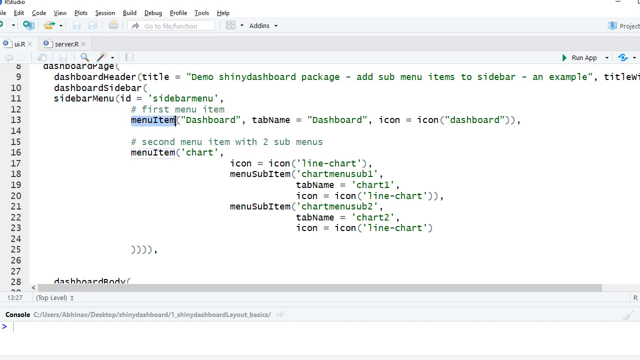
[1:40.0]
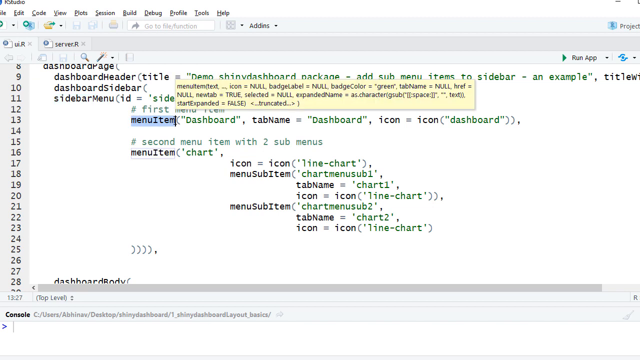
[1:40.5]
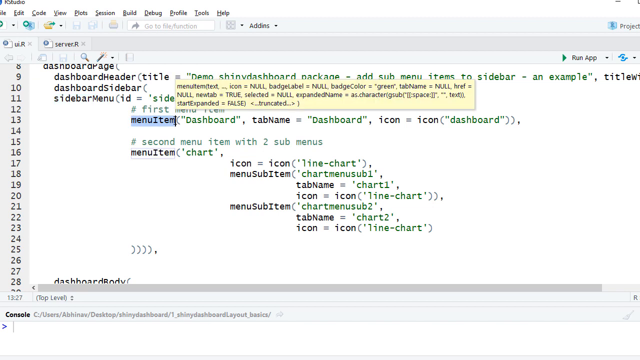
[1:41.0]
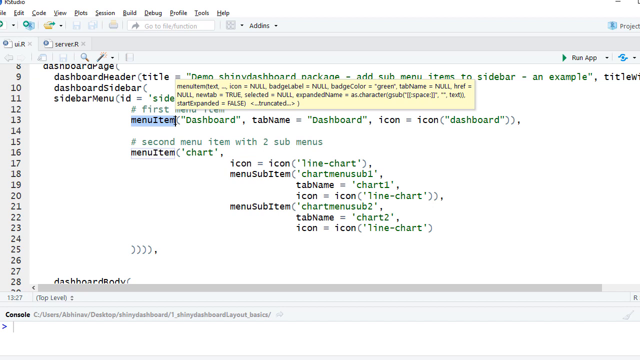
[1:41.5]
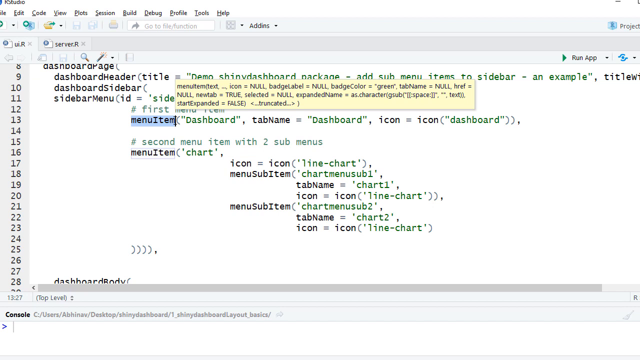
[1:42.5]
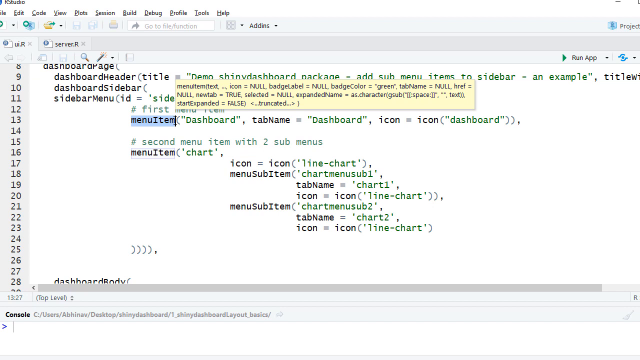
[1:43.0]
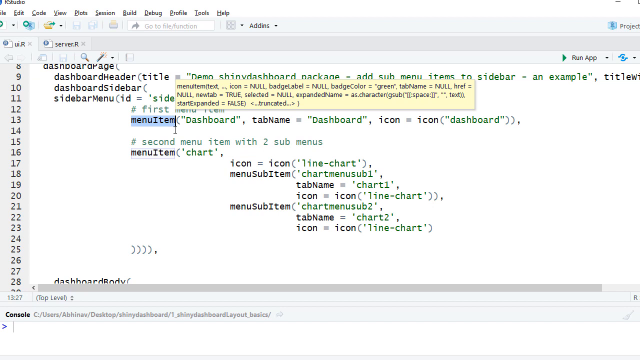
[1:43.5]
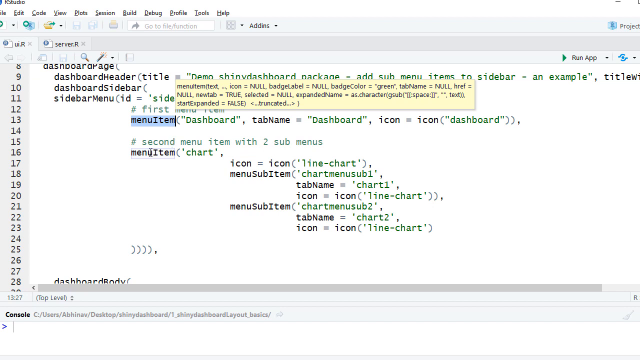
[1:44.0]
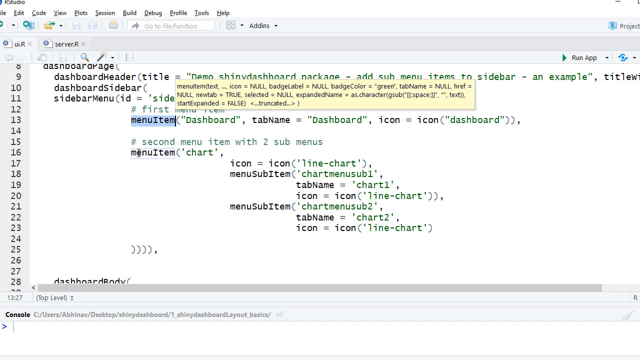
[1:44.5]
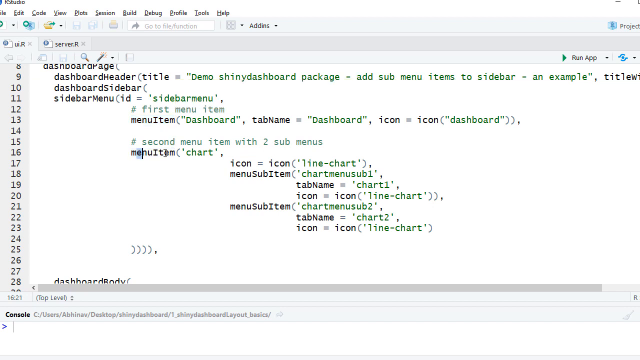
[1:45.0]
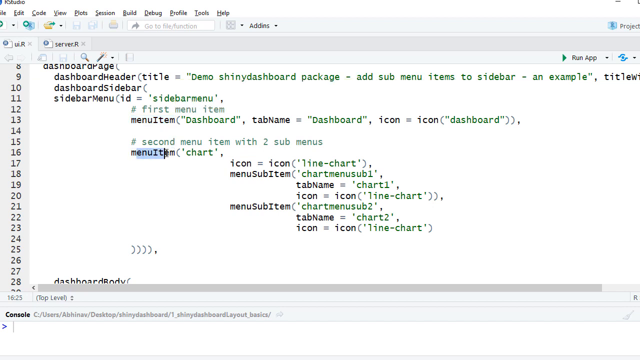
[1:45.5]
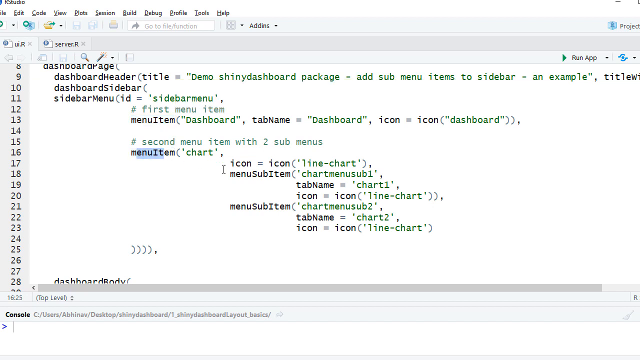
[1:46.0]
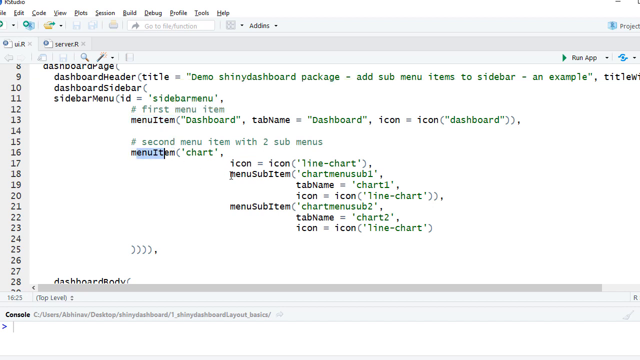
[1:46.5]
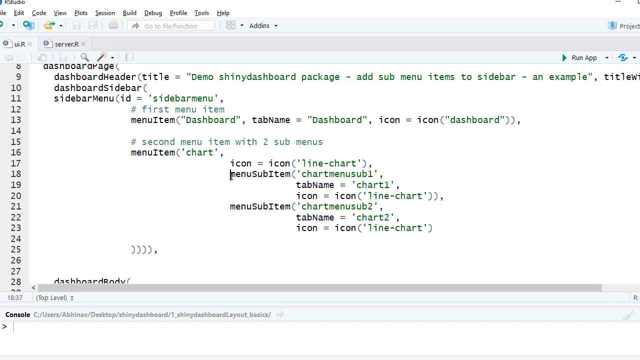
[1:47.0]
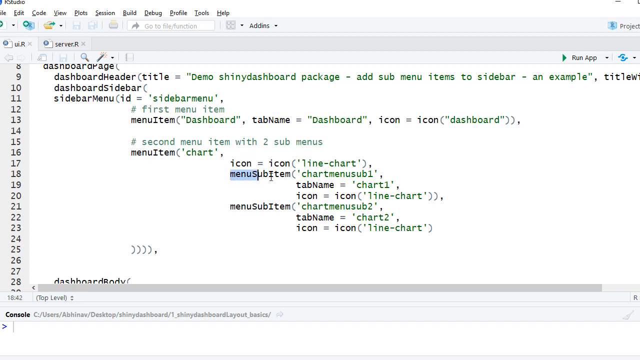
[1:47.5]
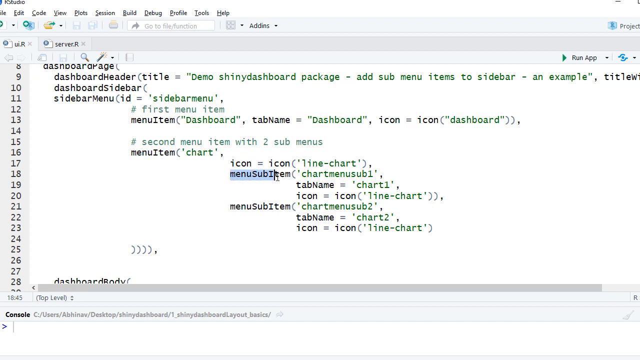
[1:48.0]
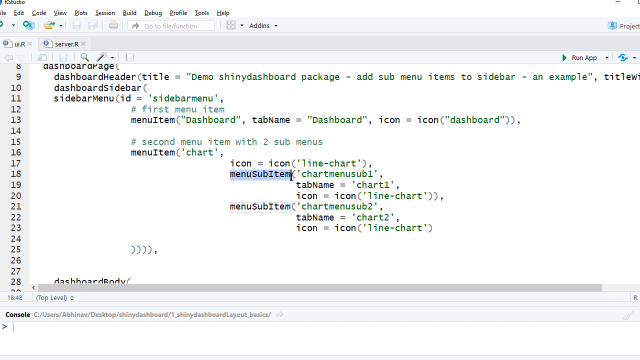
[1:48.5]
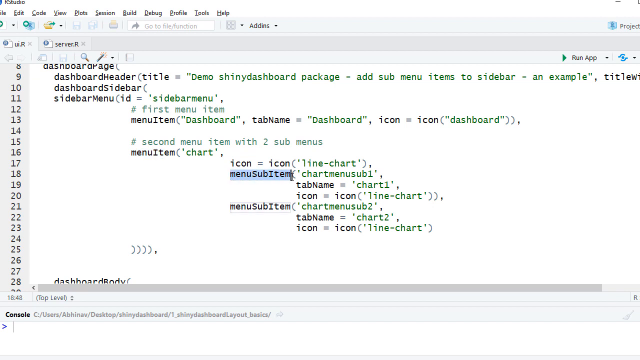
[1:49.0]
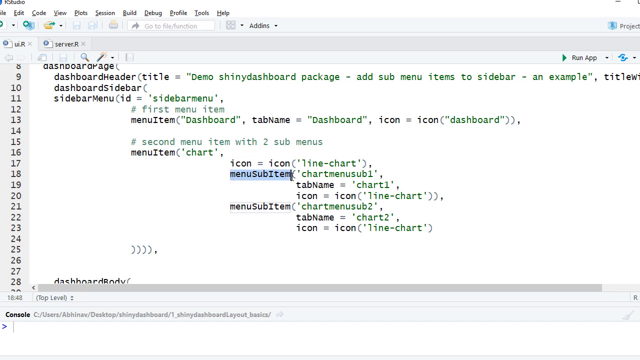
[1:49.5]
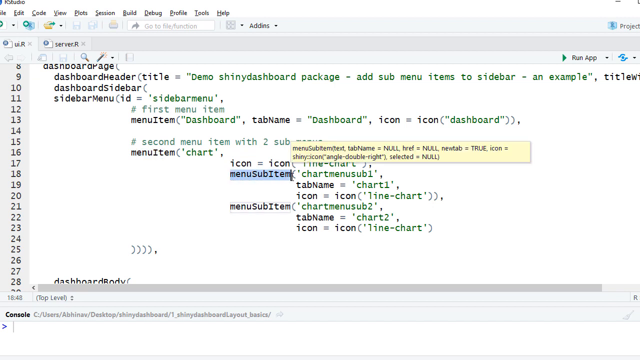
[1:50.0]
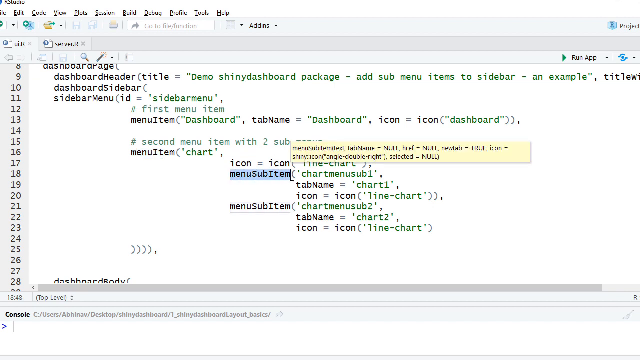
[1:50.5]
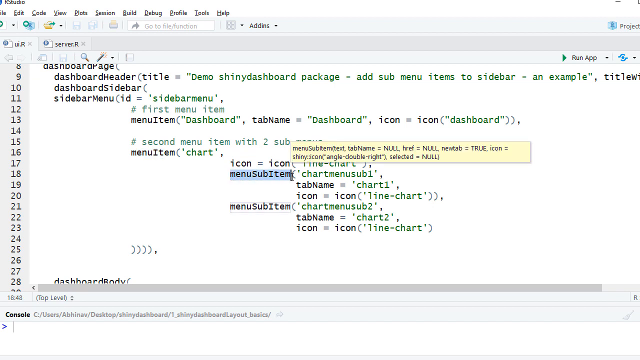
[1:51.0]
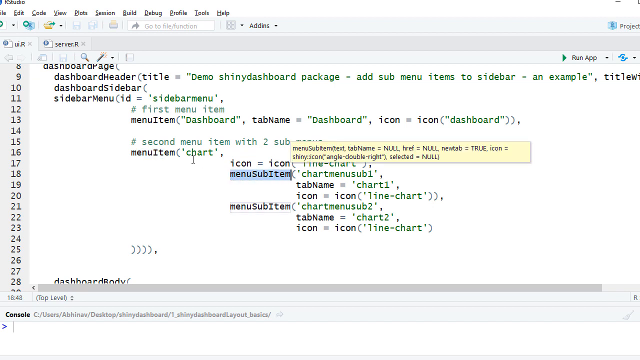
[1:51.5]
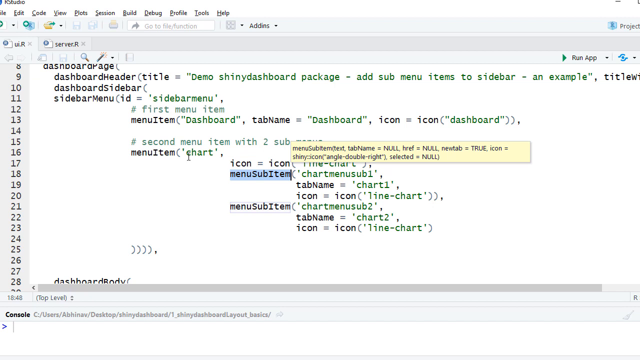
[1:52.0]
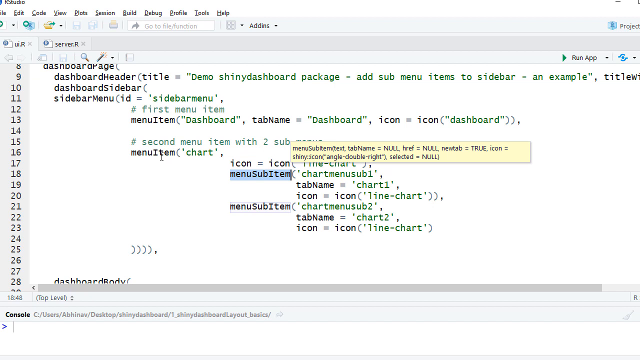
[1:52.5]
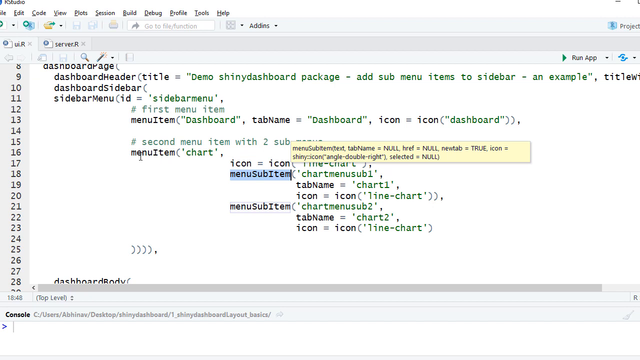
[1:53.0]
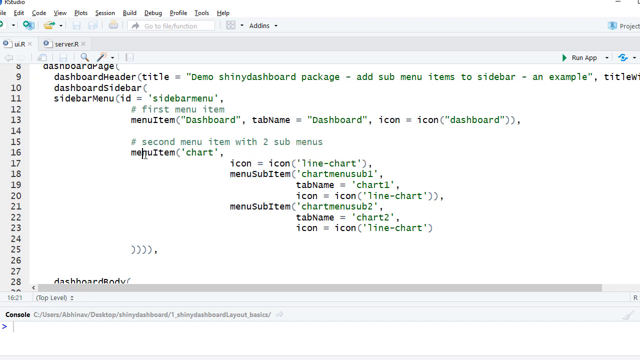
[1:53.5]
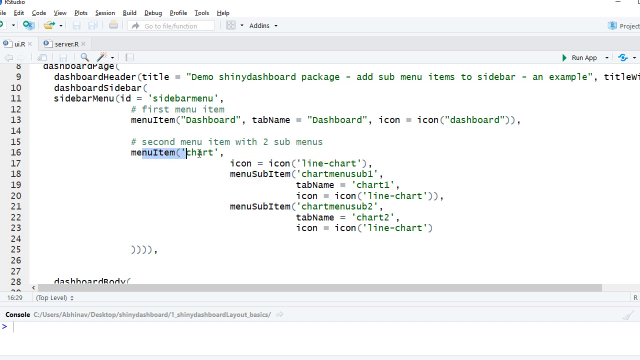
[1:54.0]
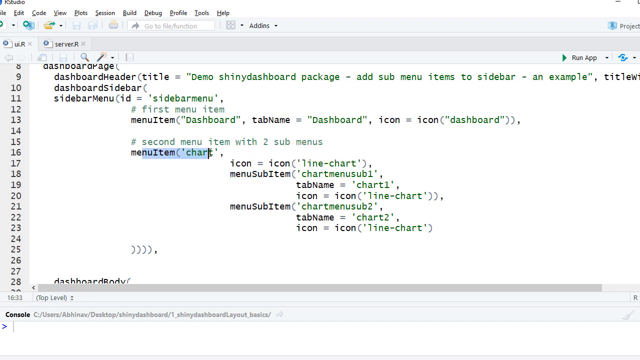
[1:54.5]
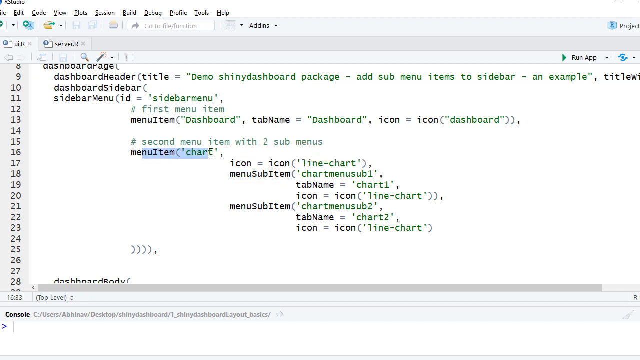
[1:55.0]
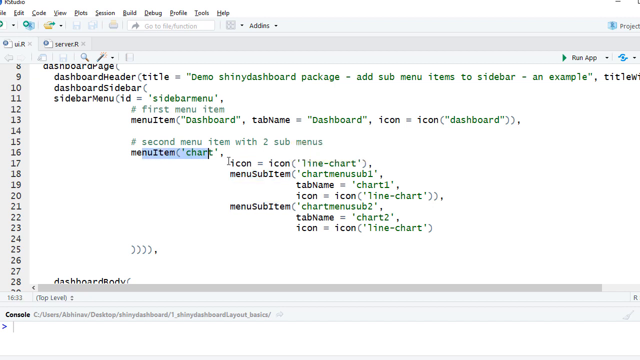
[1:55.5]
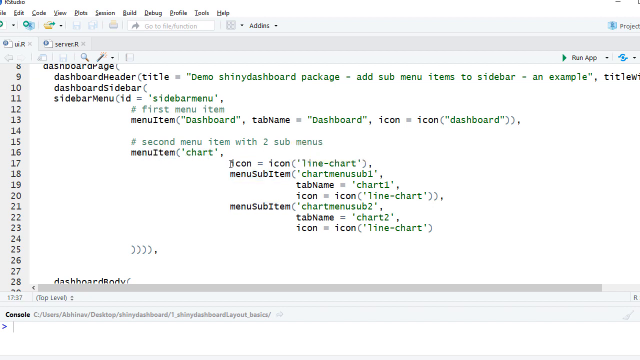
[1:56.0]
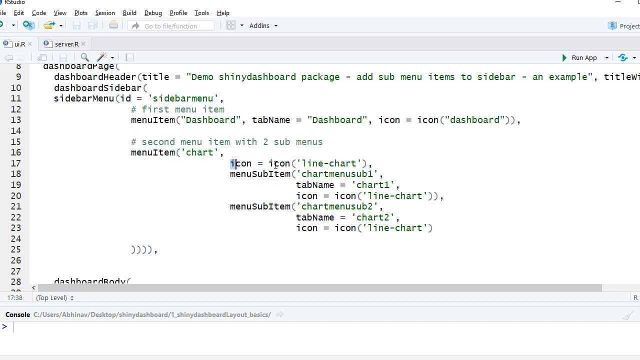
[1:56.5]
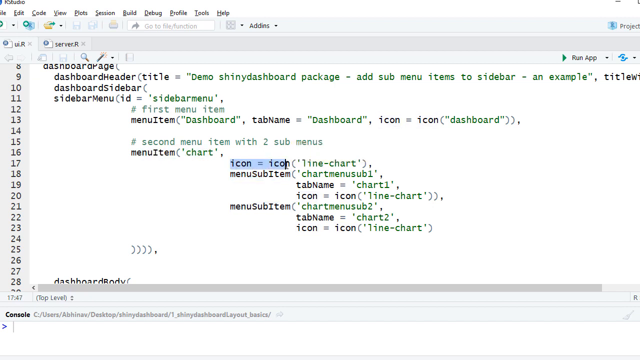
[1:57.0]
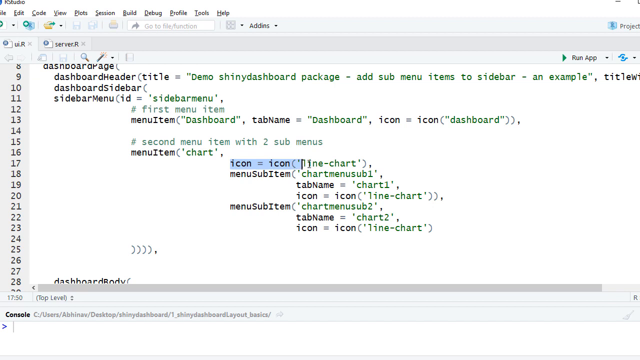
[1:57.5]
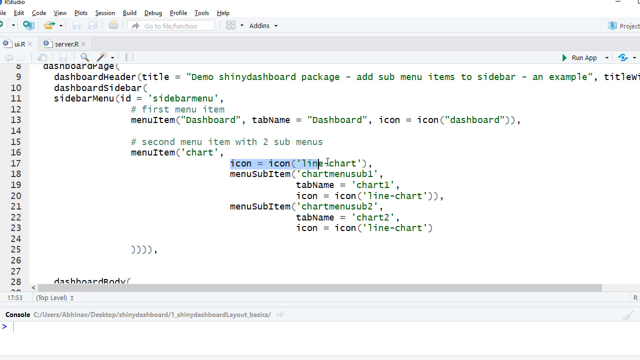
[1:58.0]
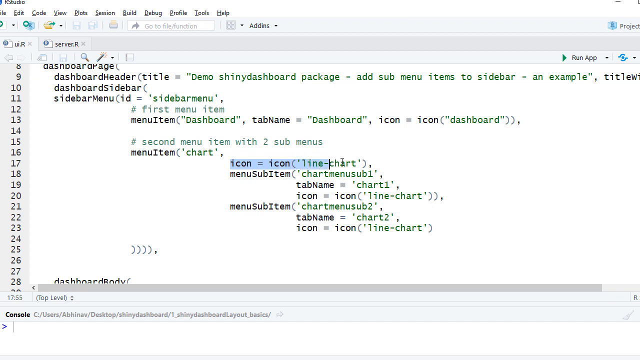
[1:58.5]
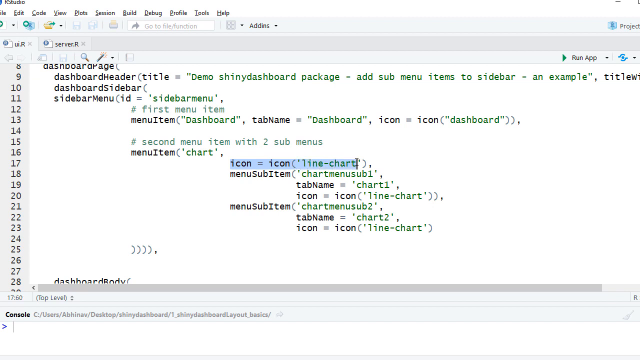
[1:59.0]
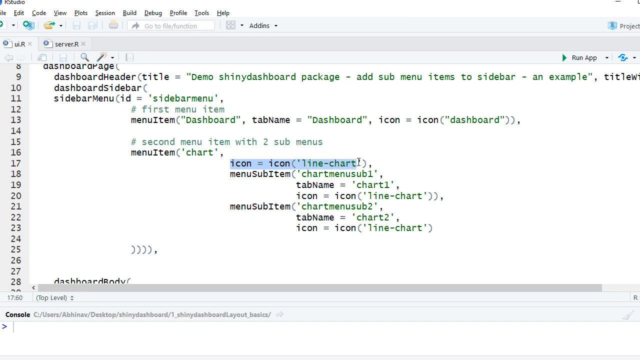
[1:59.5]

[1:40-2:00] Lines 8 to 28 appear on a white backdrop, with the computer's menu bar, including file and edit, along the very top. Everything on the left is written in black and everything on the right in green; recognizable words include dashboard and menu item. As the cursor scrolls across, the user highlights "menu item" in blue and then "menu sub-item" in blue.